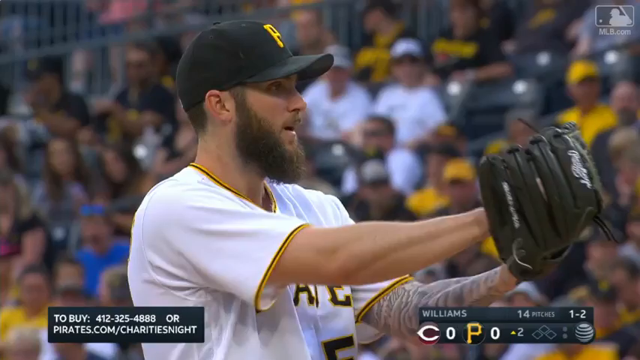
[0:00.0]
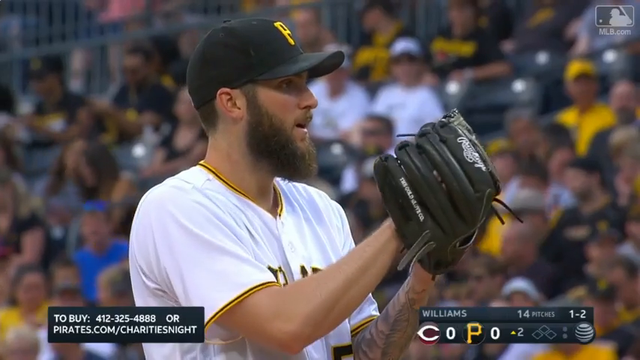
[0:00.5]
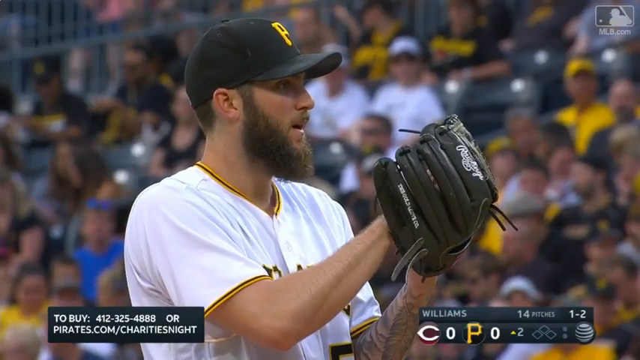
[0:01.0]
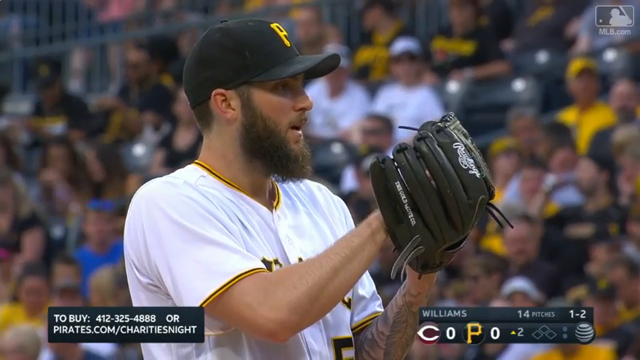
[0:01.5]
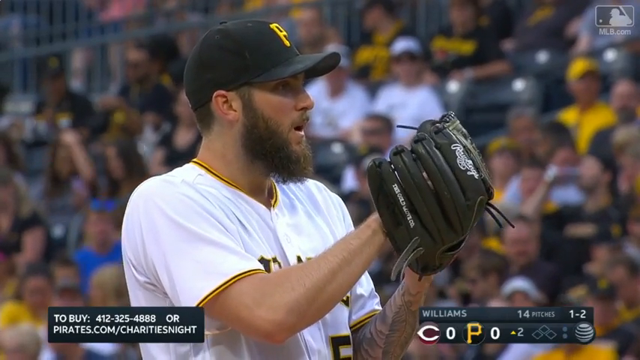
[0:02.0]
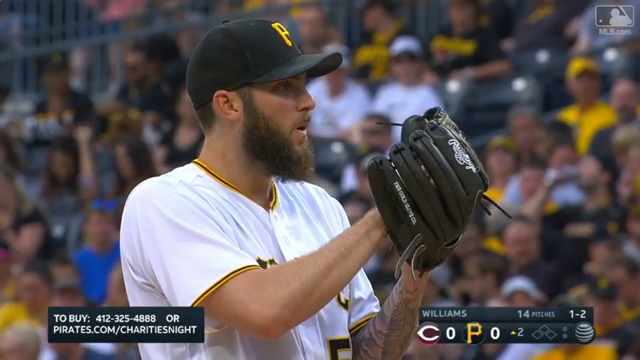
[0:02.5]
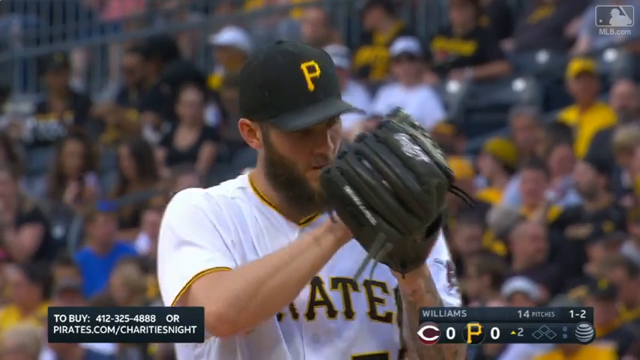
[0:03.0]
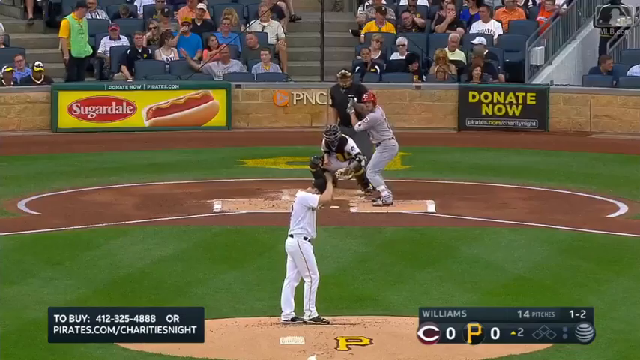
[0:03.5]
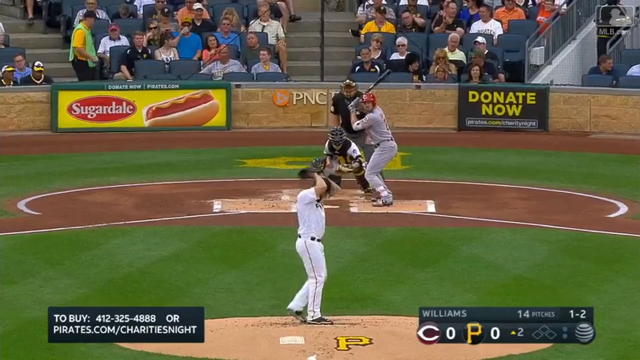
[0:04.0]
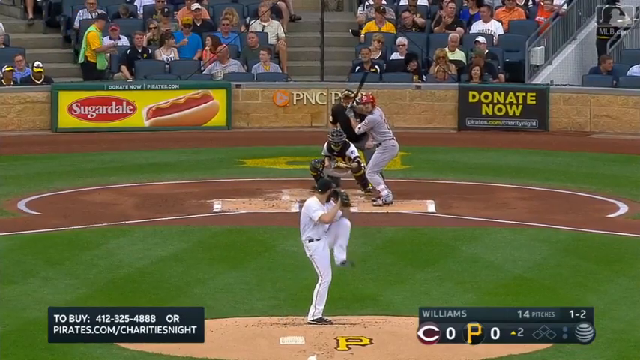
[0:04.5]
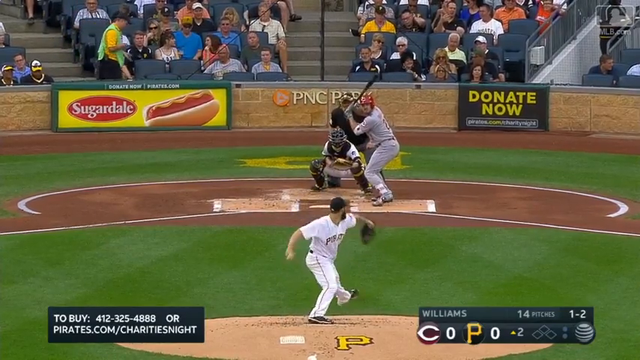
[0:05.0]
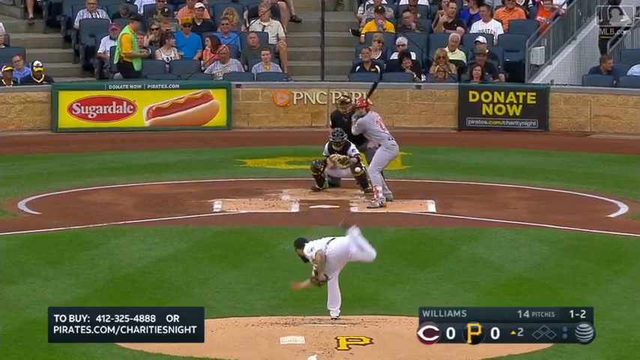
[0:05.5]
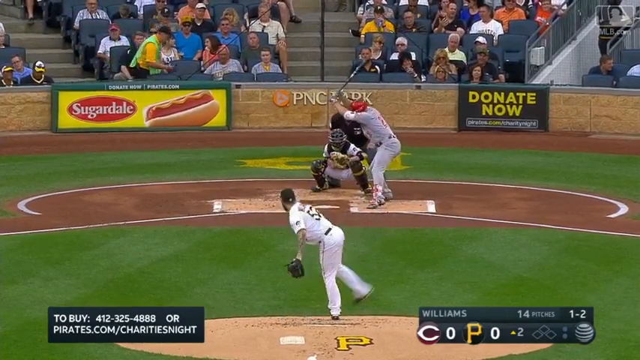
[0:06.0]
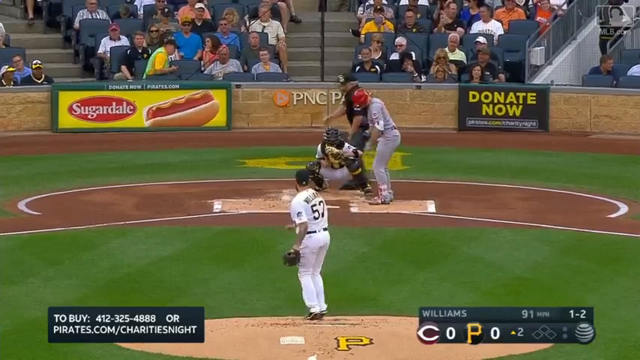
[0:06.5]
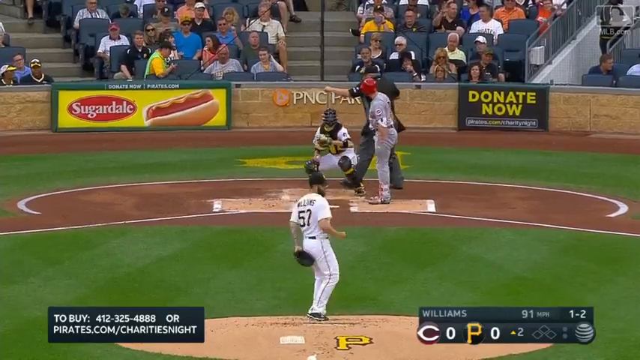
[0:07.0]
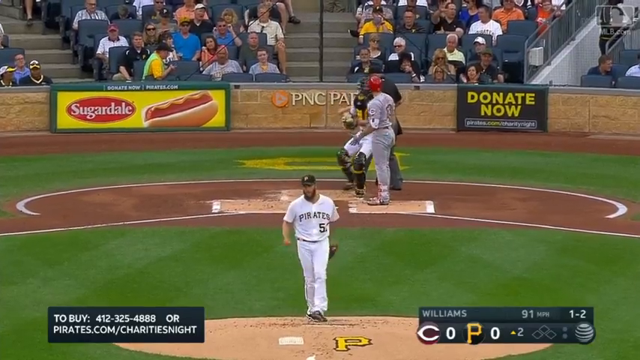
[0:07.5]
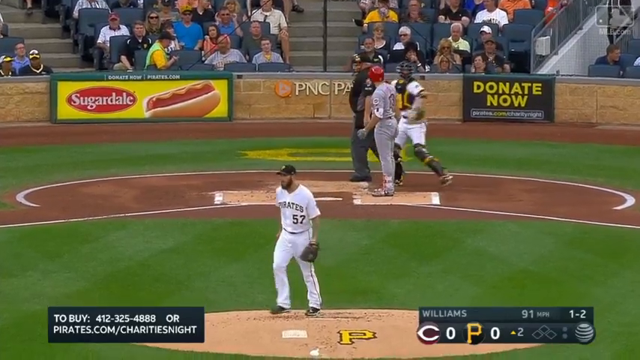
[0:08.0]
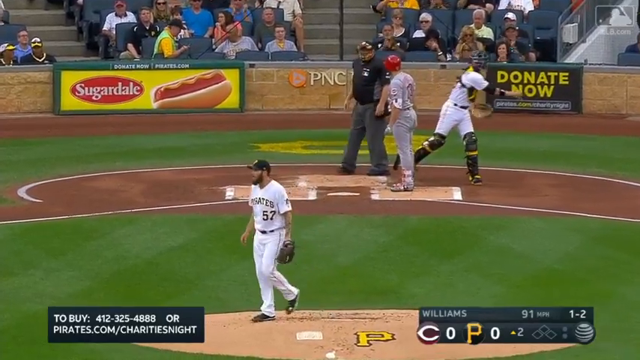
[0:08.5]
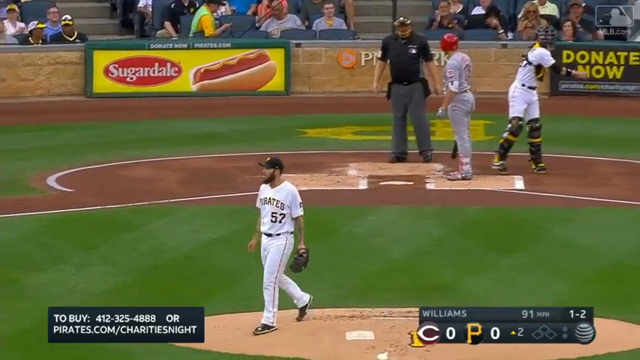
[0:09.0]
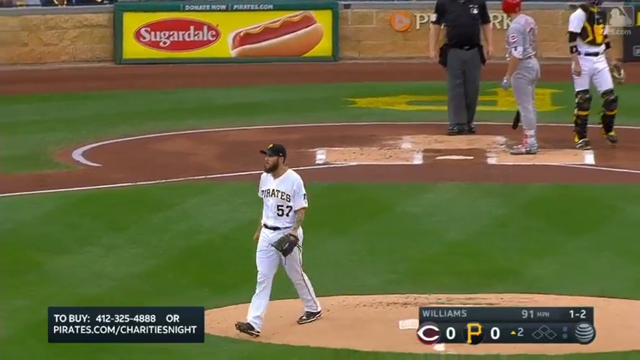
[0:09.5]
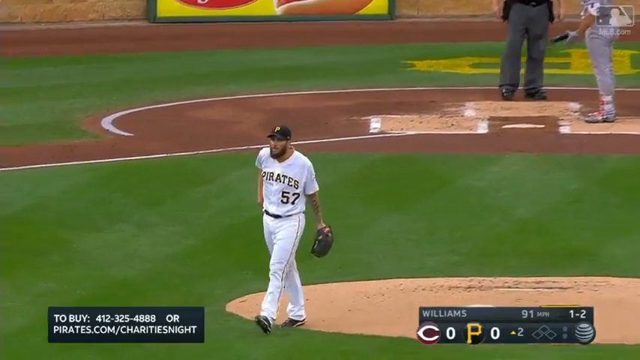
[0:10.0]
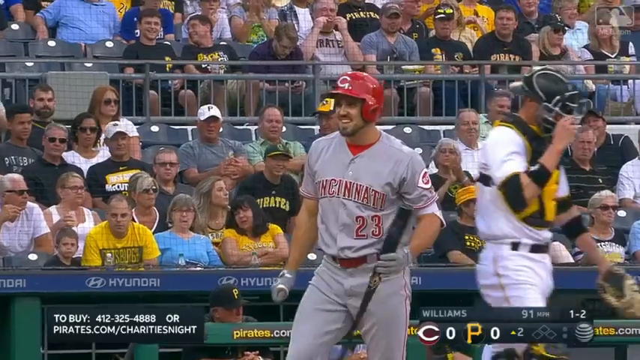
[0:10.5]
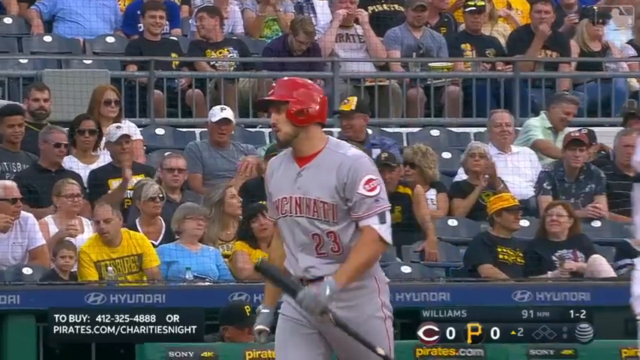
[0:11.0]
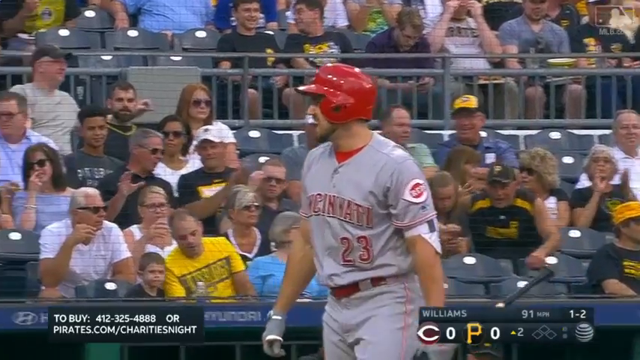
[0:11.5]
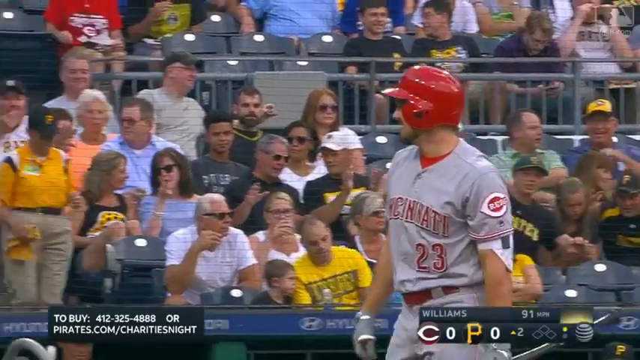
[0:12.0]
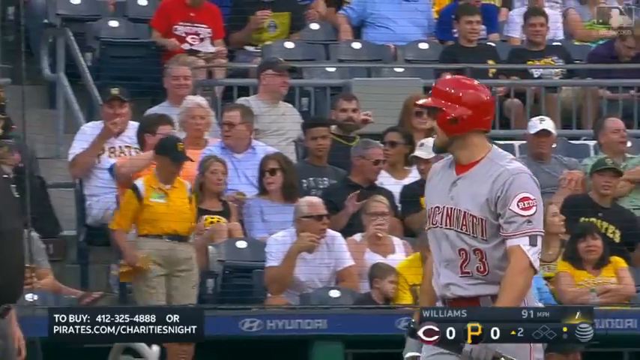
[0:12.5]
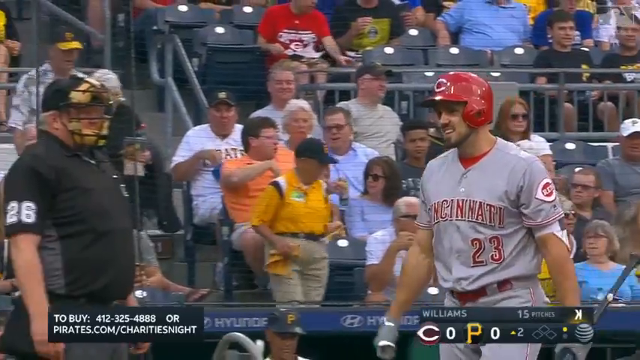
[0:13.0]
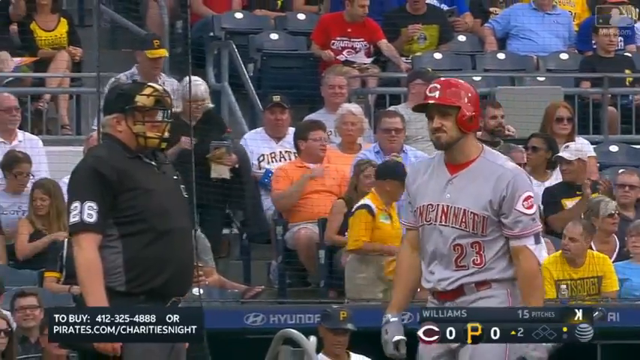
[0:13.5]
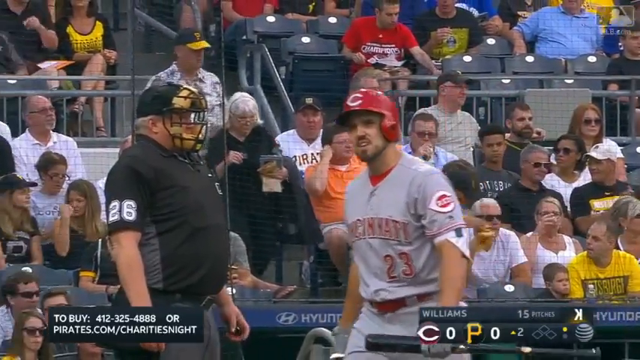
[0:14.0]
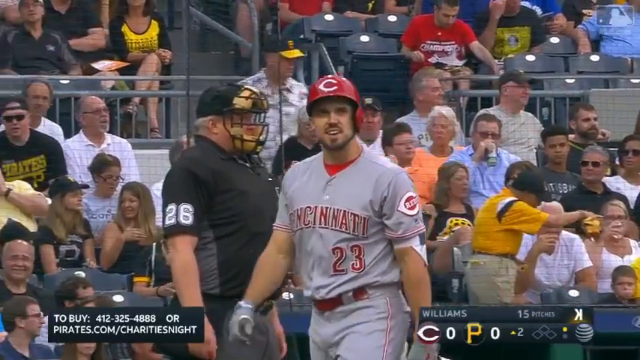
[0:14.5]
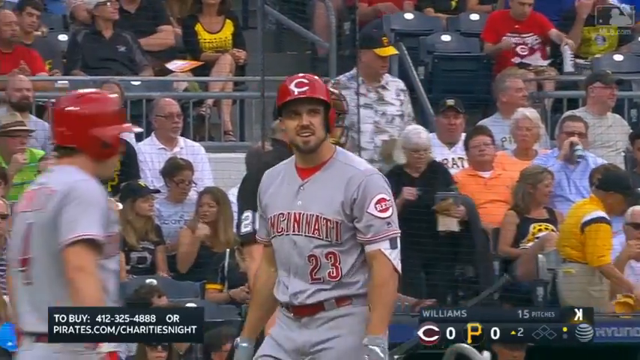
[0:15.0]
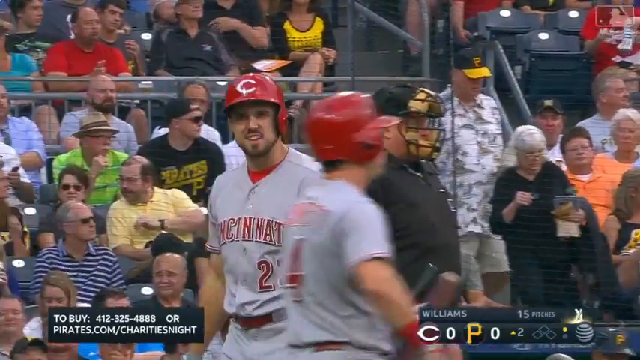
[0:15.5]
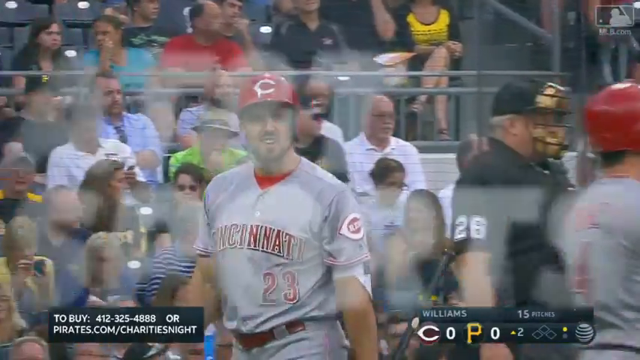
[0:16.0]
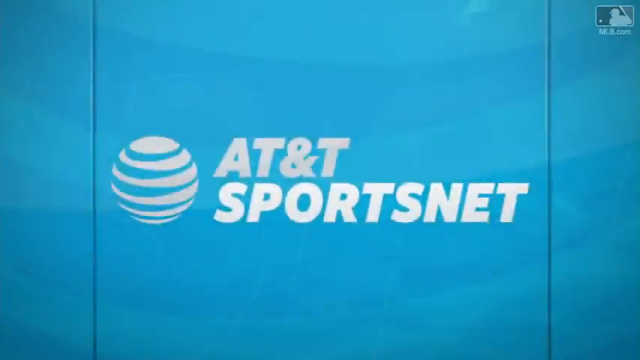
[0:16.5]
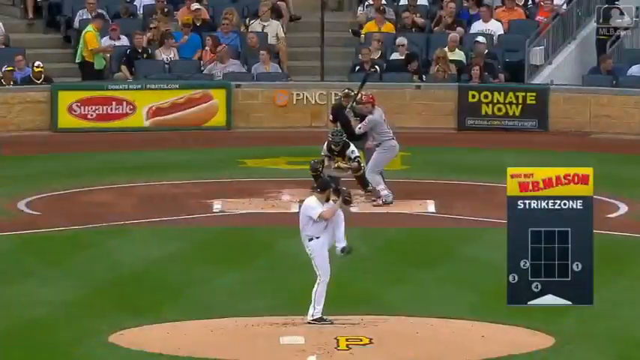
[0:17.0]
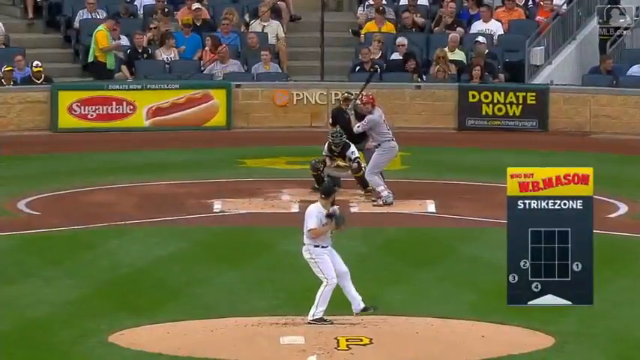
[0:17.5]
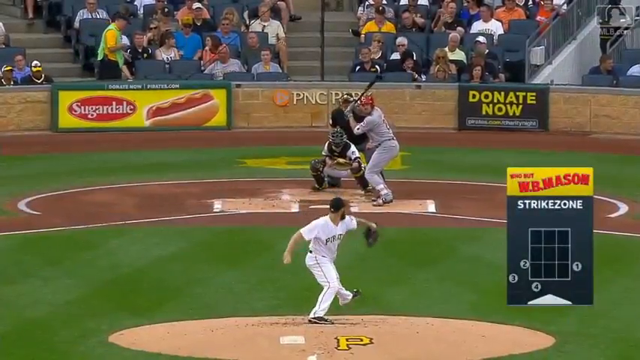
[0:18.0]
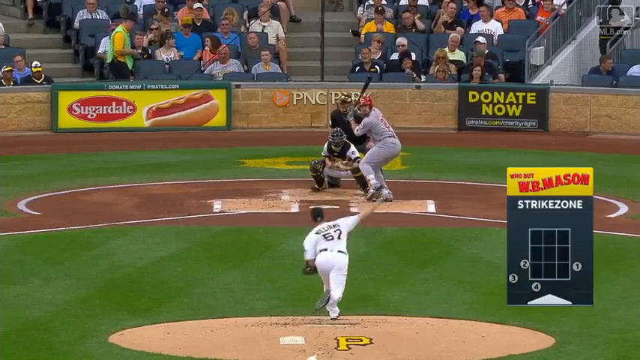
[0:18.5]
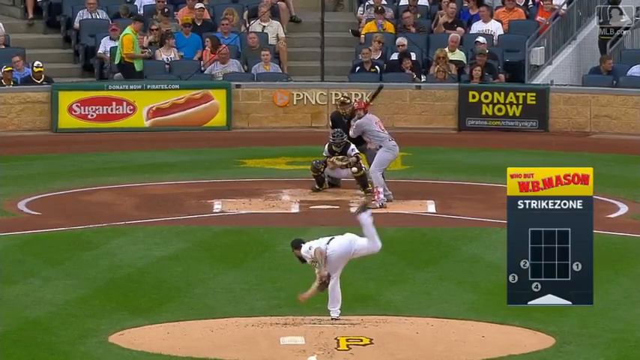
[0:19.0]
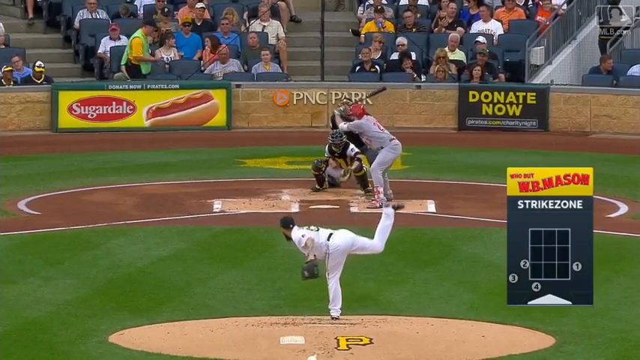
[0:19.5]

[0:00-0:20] A Major League Baseball game is shown on majorleaguebaseball.com, with the Pittsburgh Pirates just about to pitch against the Cincinnati Reds. The pitcher, number 57, is a white male with a big beard and small ears, wearing a white kit and a black baseball cap. He throws right-handed, and the batter, in a grey uniform and red batting helmet, does not attempt to swing. The batter stalks off, not looking very happy, and curses as he walks away from the plate. The pitch is shown again, and it appears to be a strike.